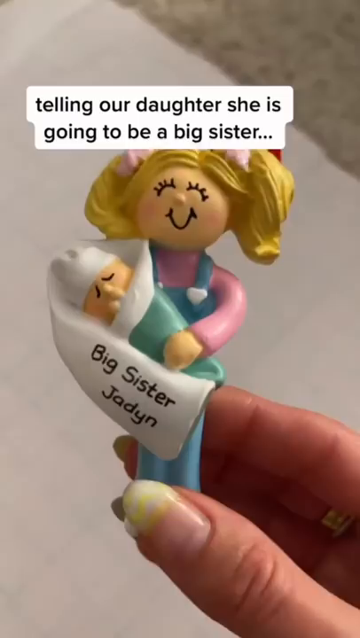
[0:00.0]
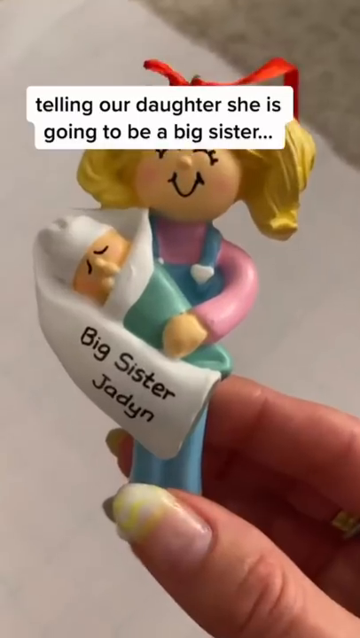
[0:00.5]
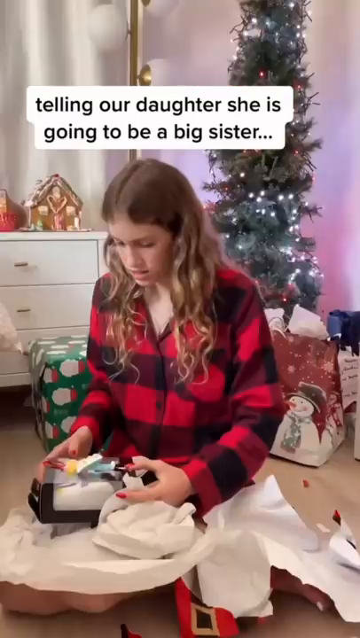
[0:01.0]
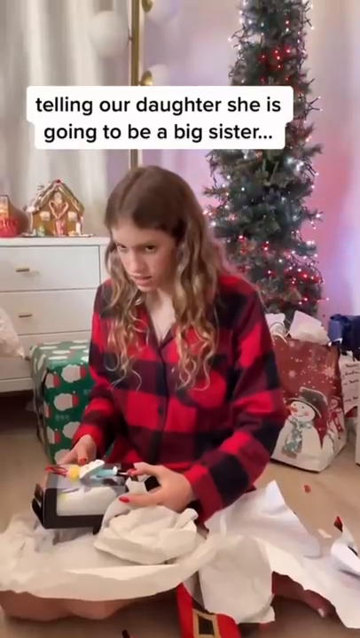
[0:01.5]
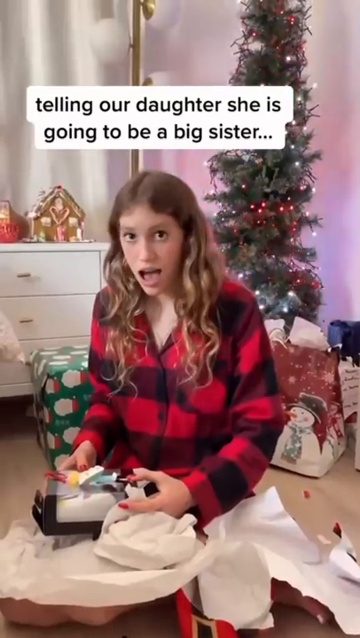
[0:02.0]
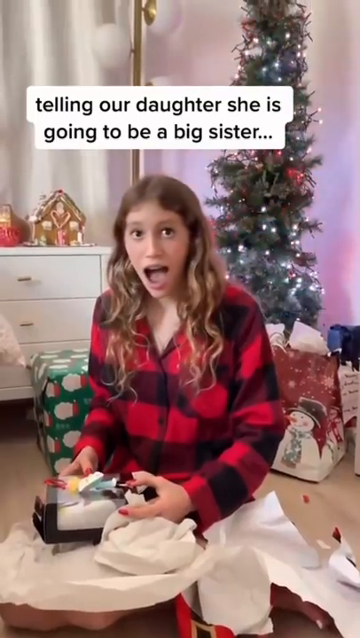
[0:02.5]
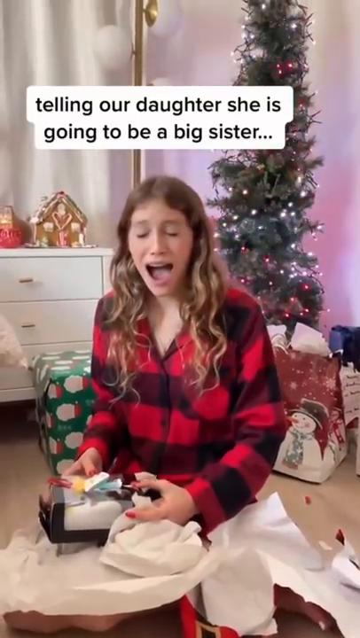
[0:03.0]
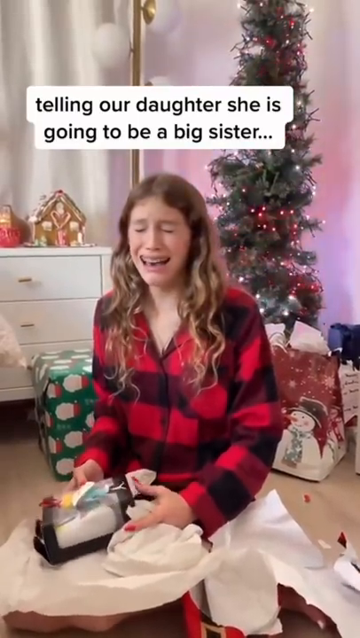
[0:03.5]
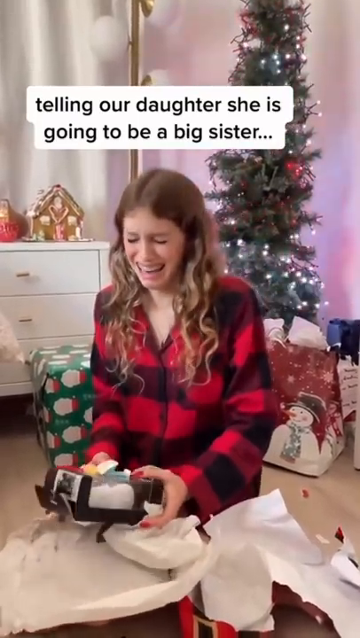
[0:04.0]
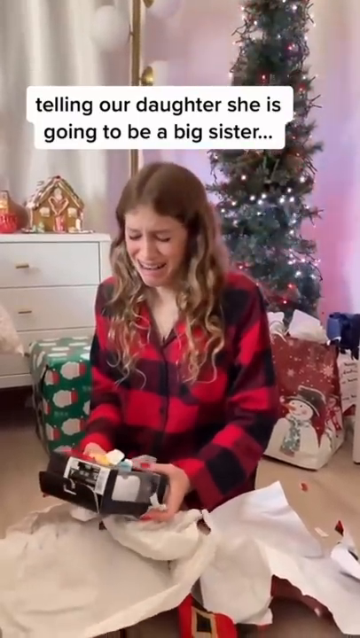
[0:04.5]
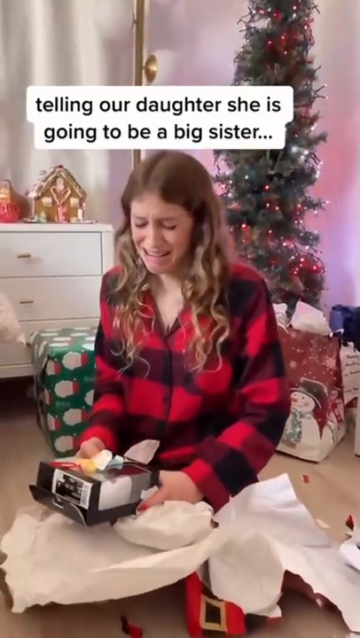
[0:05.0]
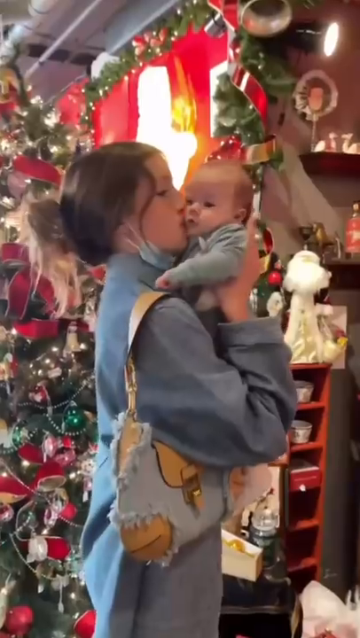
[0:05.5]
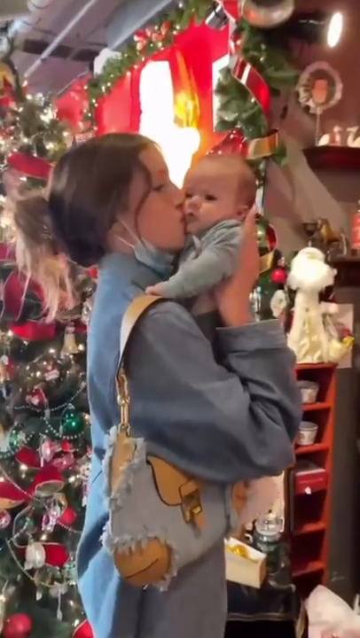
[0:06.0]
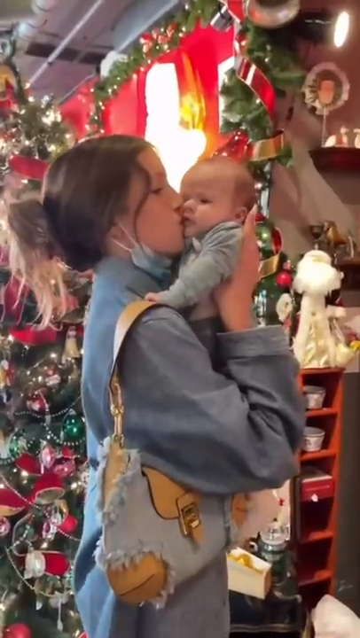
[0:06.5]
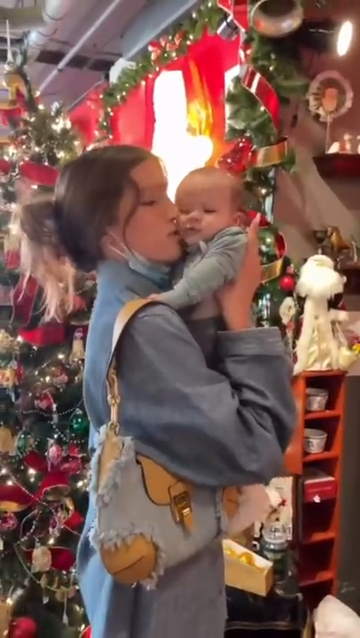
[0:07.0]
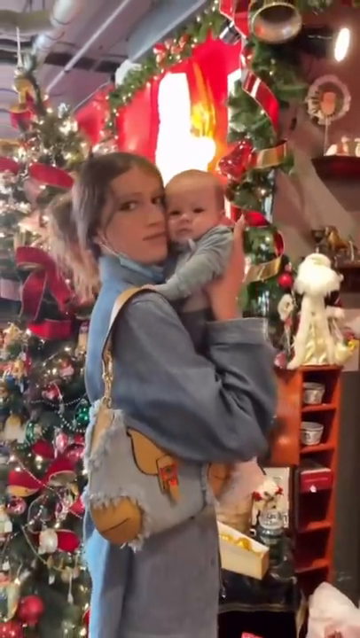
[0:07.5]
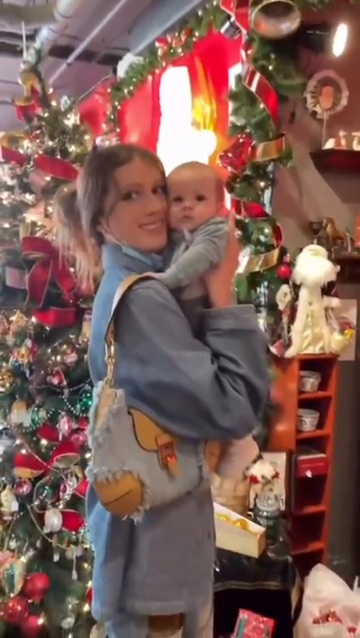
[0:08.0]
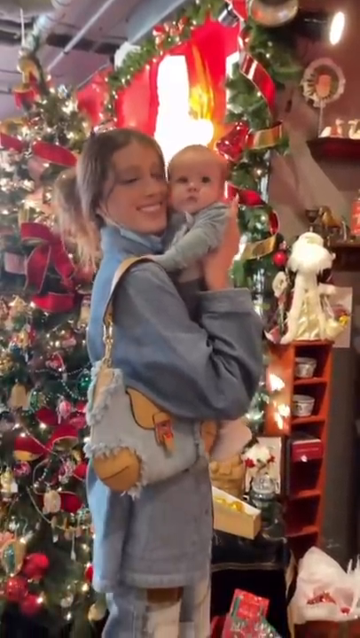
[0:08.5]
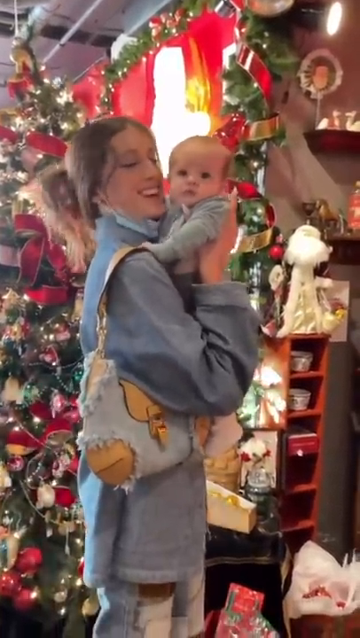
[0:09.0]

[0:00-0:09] The video is titled "Last year versus now," and there appears to be a caption that says "telling our daughter she is going to be a big sister." A girl who looks maybe 12 or 13 sits on the floor in front of a lit-up Christmas tree behind her, so it appears to be Christmas time. She wears plaid pajamas, as if it is Christmas morning and they are opening gifts. One of the gifts she has opened is a box with a little toy figurine in it; the figurine has a little sign on the front that says "big sister," and on top of the figurine there is a sign that says "big sister Jaden." This is how the parents or mom tell their daughter she is going to be a big sister, and the girl is apparently named Jaden. In the second part, the teenage girl is standing, seemingly in a store, with Christmas decorations still everywhere, and she is kissing her little sister, who appears to be maybe three to five months old.